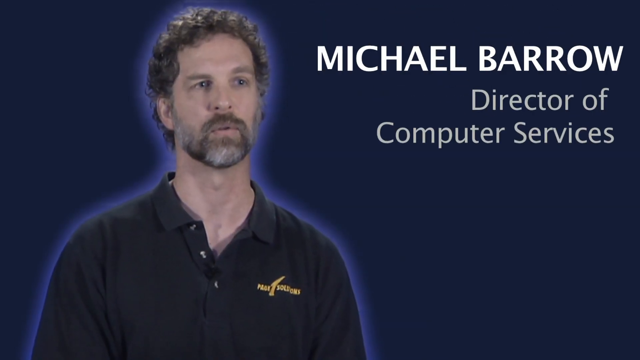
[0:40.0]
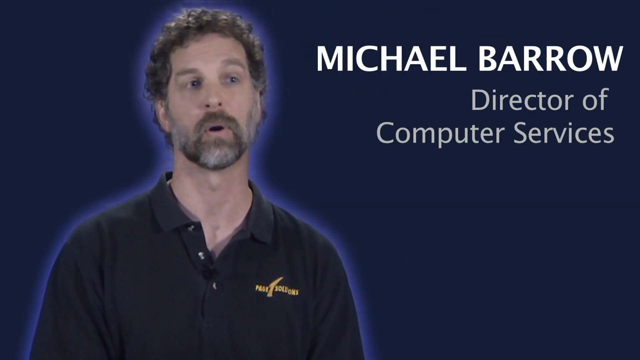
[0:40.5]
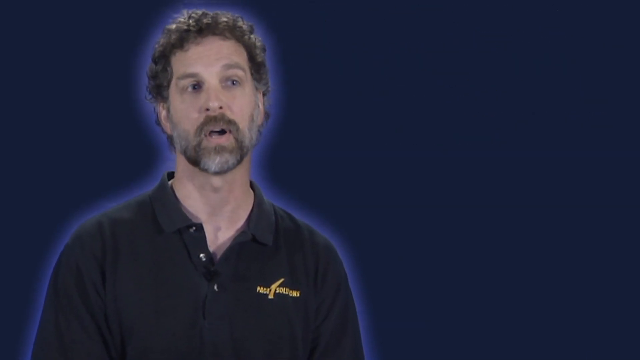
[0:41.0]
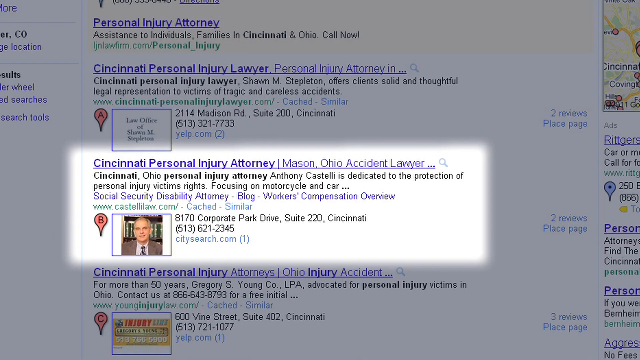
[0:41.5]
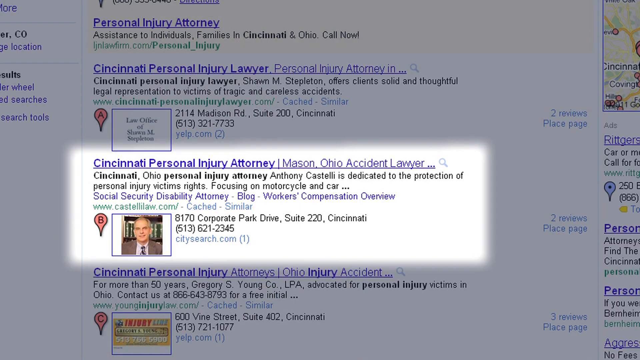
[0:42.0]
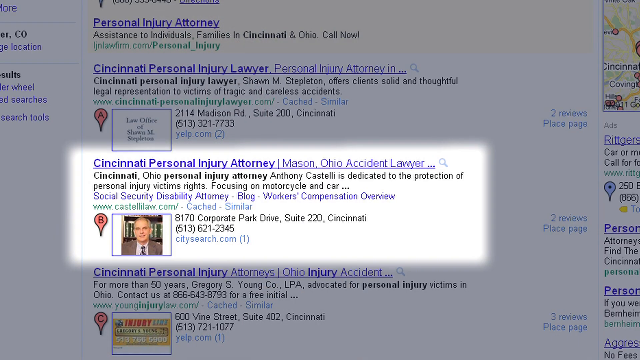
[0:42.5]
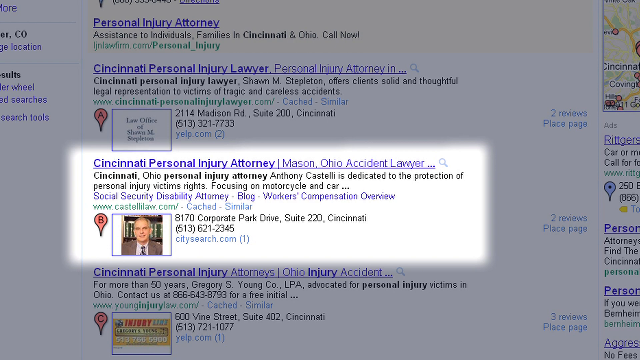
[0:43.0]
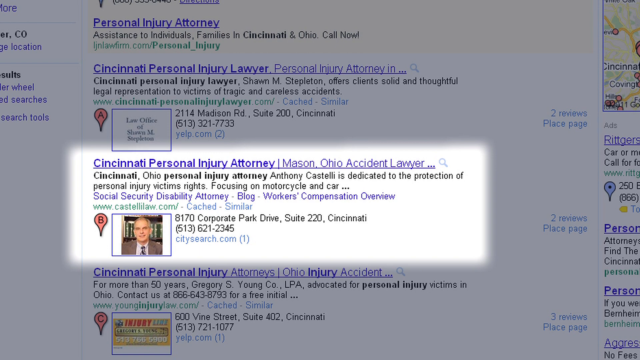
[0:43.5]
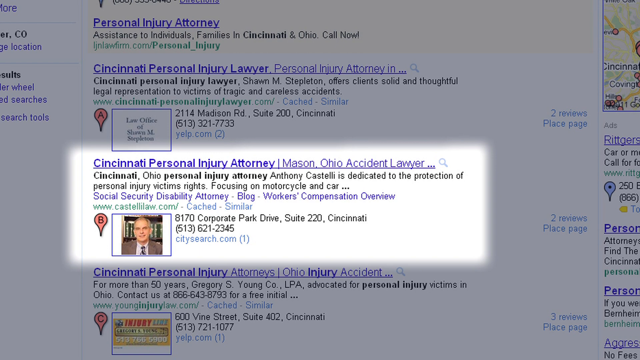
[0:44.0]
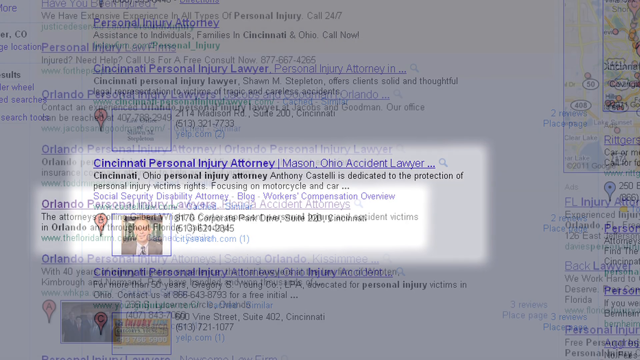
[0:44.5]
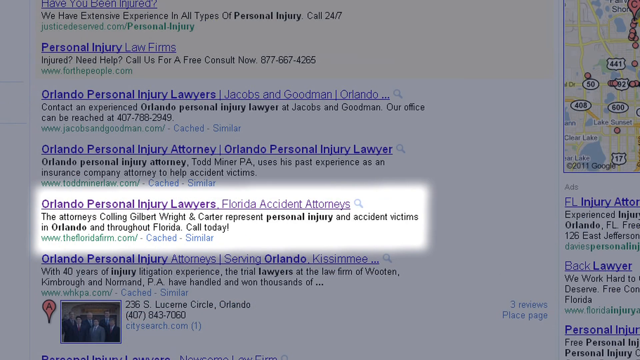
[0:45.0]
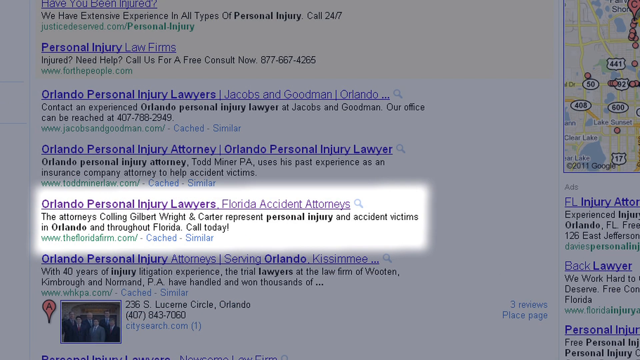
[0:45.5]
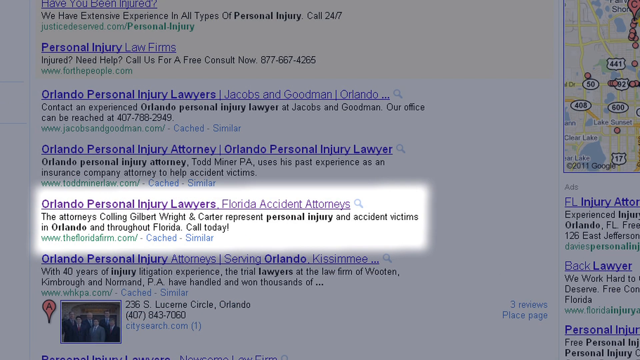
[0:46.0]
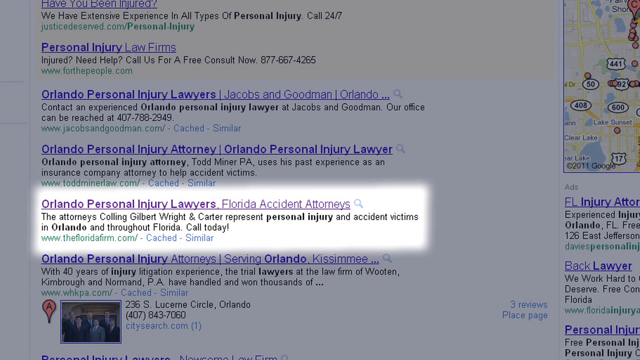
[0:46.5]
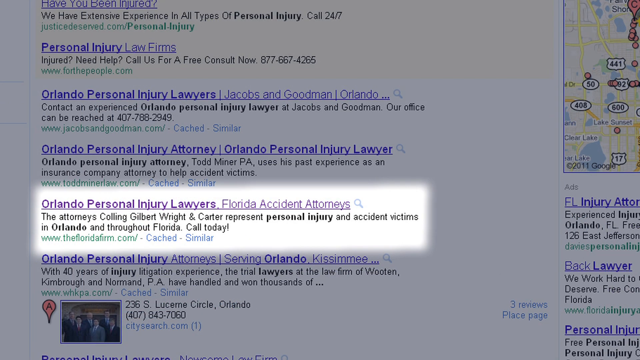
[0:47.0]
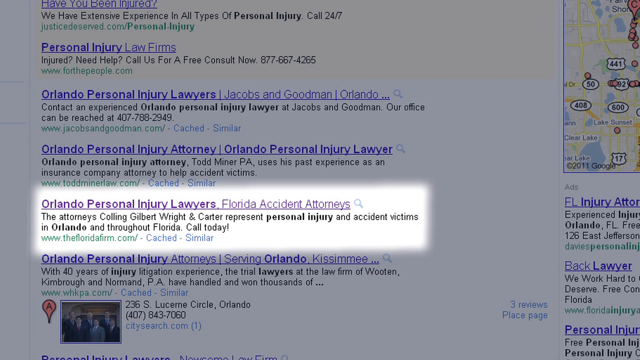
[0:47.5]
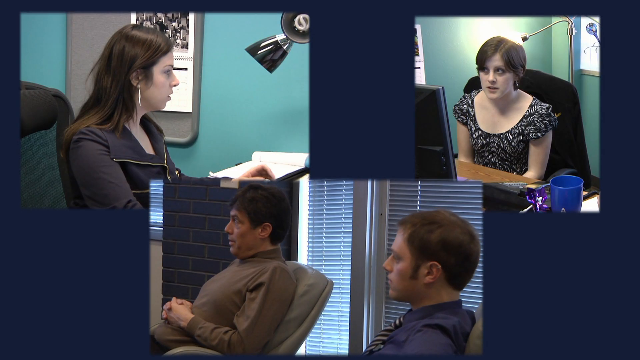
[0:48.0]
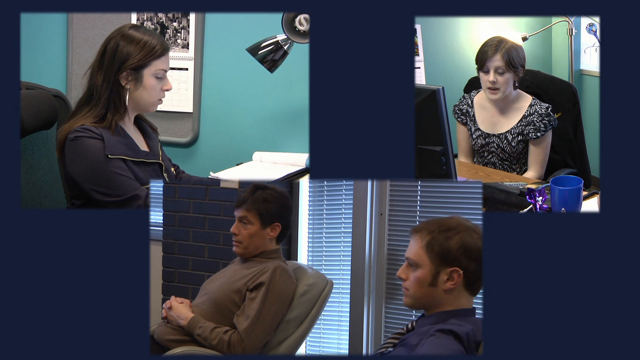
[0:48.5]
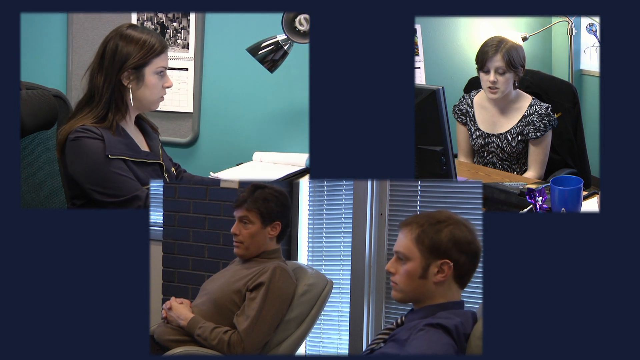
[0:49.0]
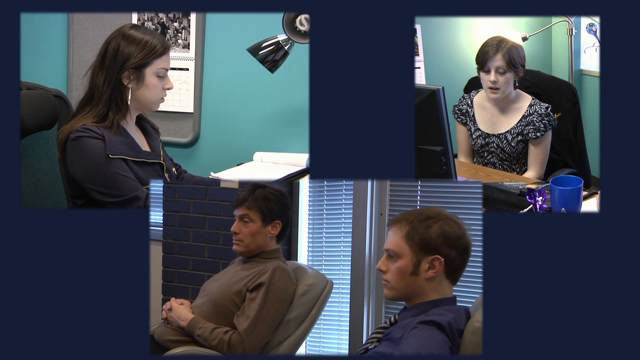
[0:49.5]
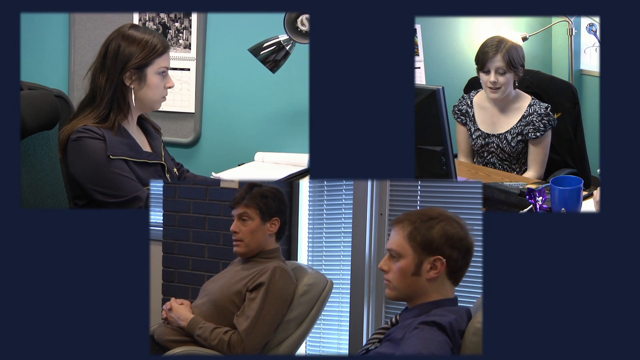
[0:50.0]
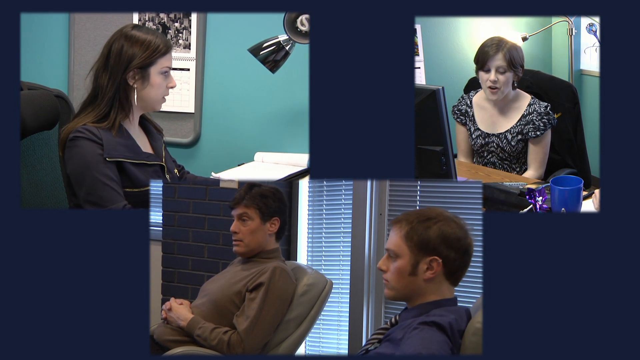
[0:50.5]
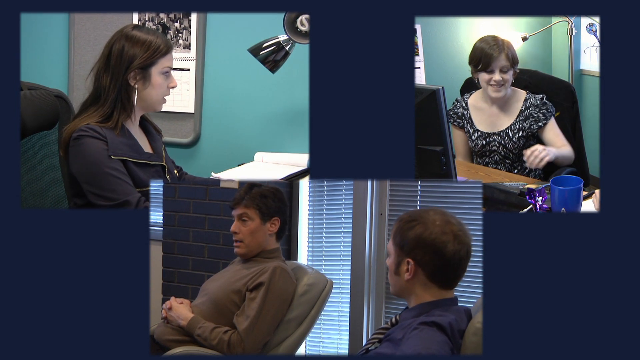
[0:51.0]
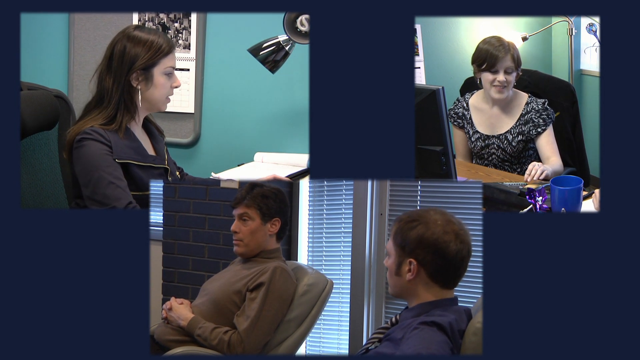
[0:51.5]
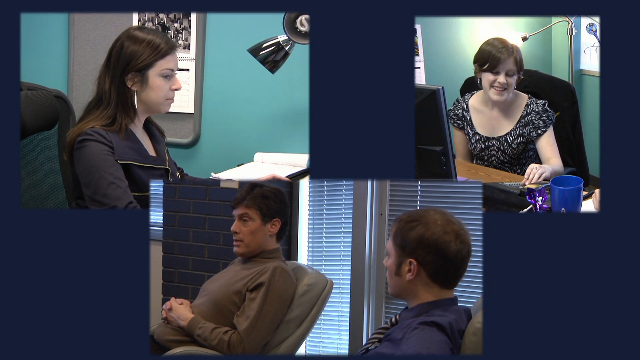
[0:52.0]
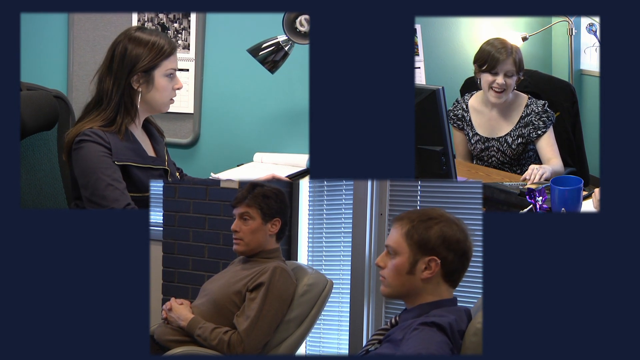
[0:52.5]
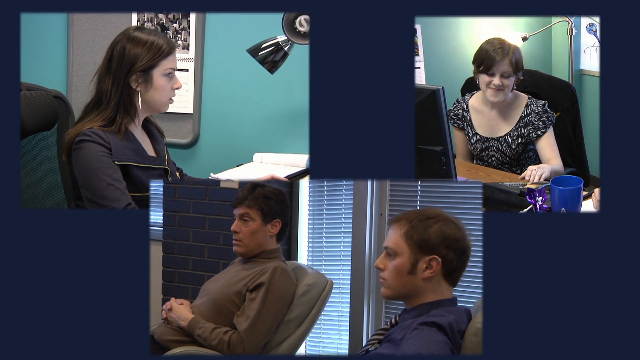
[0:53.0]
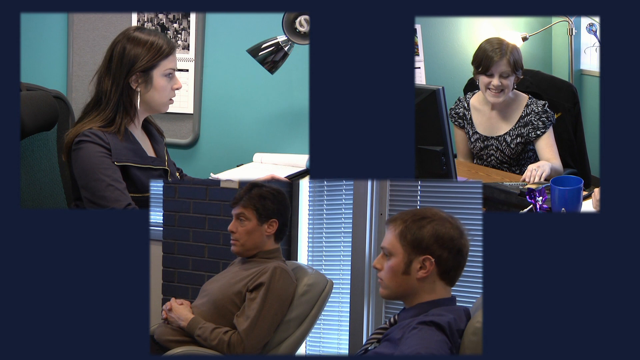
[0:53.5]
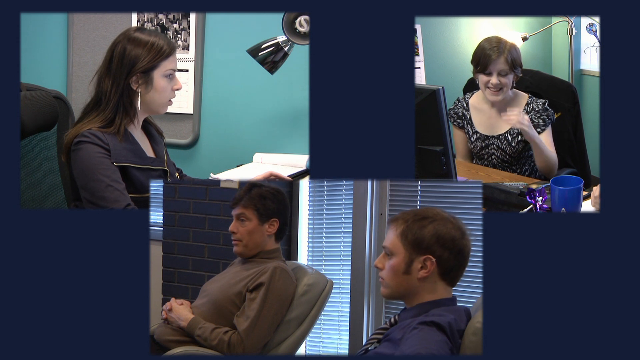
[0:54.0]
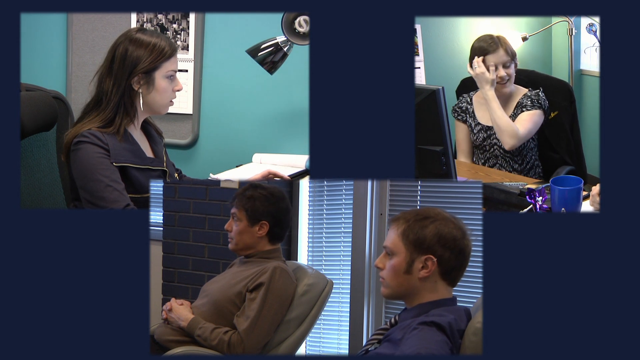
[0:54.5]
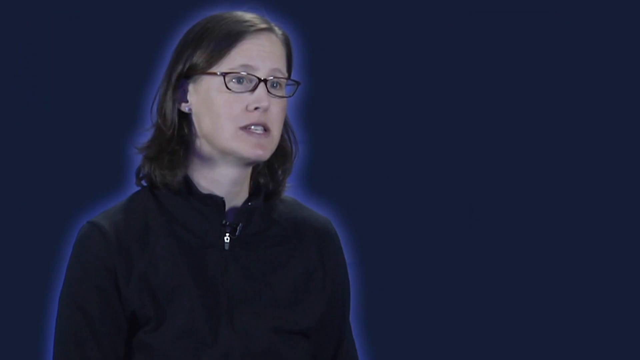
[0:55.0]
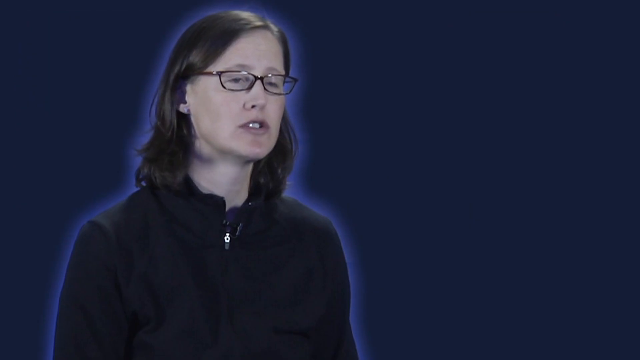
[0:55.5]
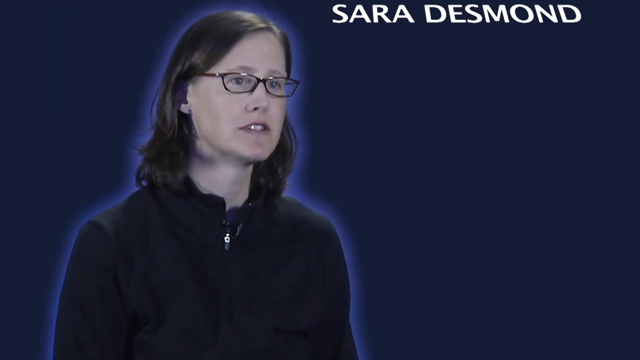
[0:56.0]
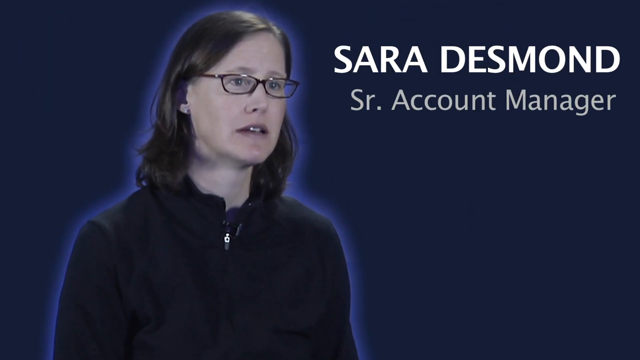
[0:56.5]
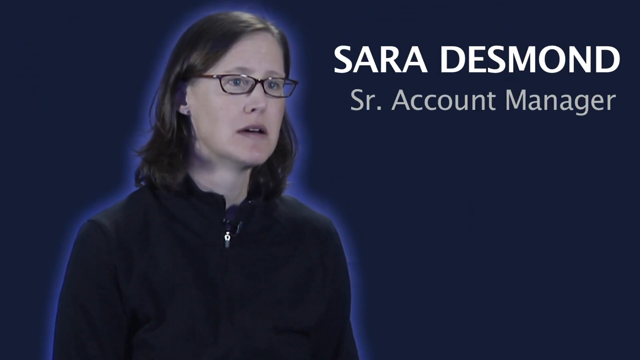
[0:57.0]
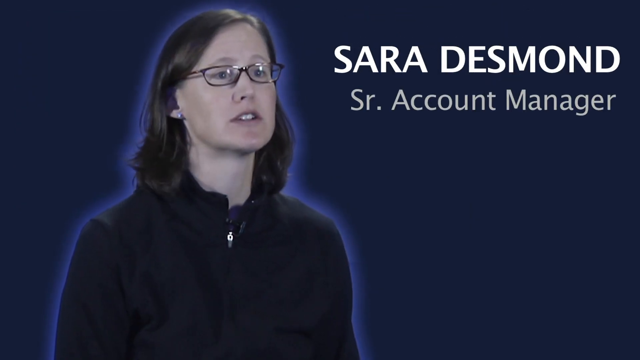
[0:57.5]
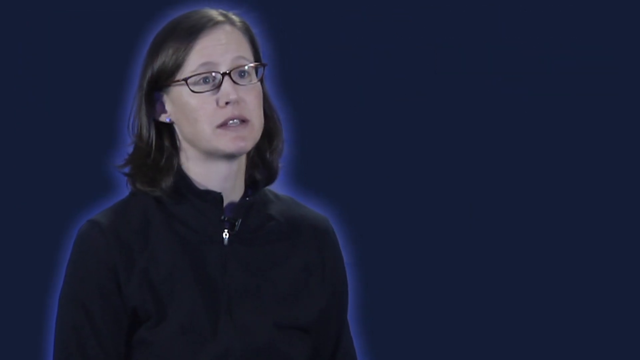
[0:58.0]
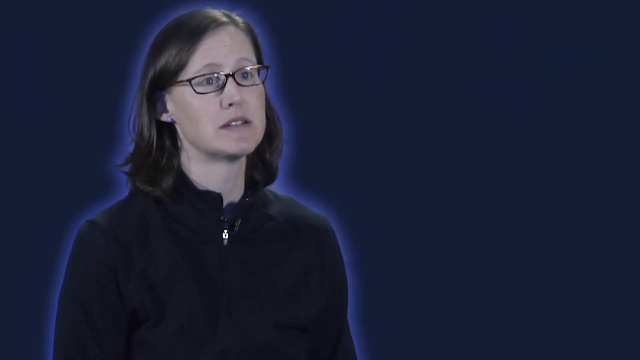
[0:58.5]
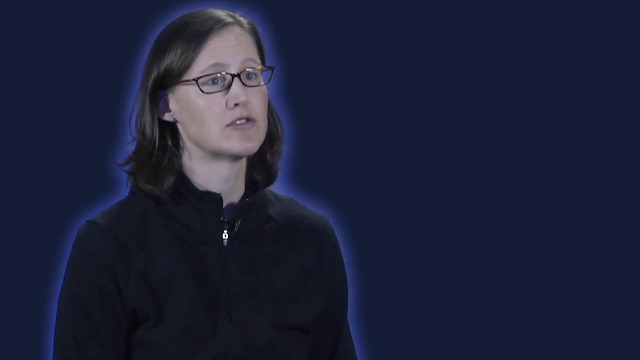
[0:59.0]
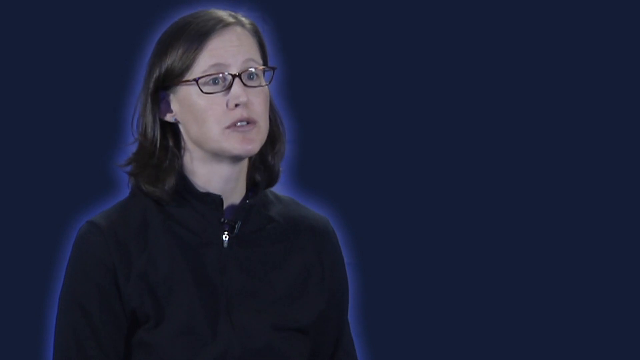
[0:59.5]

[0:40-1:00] Michael Barrow, director of computer services, is shown first. Then listings appear for "Cincinnati personal injury attorney" and "Mason, Ohio accident lawyer" with information found on the web, followed by "Orlando personal injury lawyers" with information about firms in Orlando. Four individuals then appear, almost as if in a Zoom group, possibly talking to each other; two of them look like they are in the same room, with their heads turned to the side. A picture of a woman pops up: she has shoulder-length brown hair and rectangular black glasses, and text beside her reads "Sarah Desmond, senior account manager." She is surrounded by a blue line that makes her look like she is glowing. The video then cuts to a Google search where someone has typed "Orlando personal injury lawyer," with several listings showing in the results.